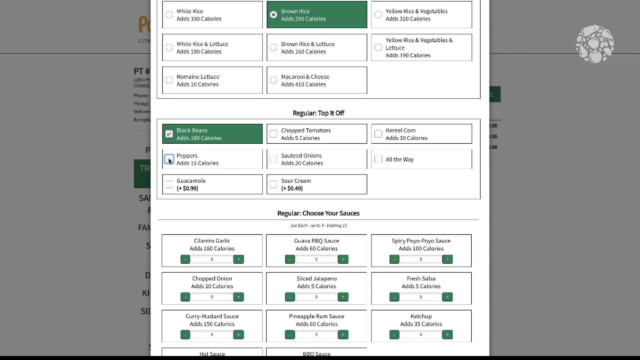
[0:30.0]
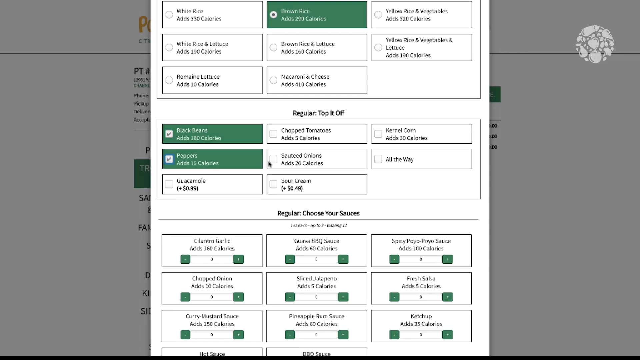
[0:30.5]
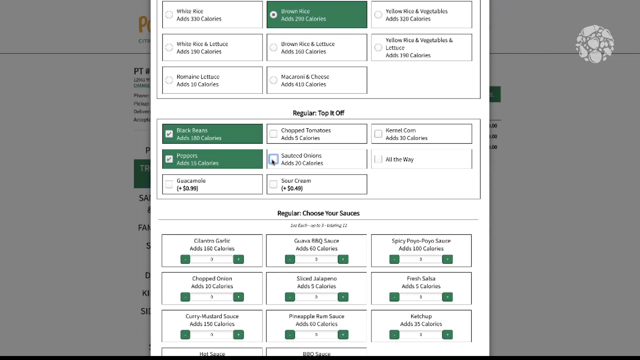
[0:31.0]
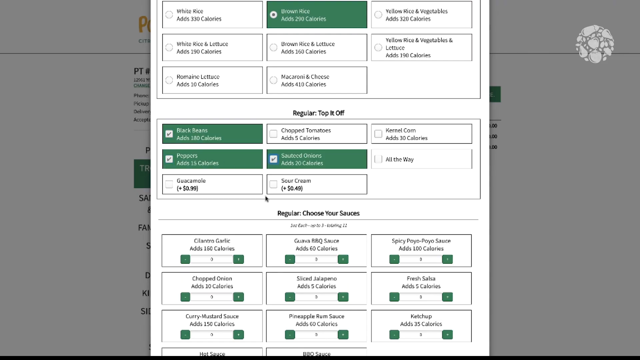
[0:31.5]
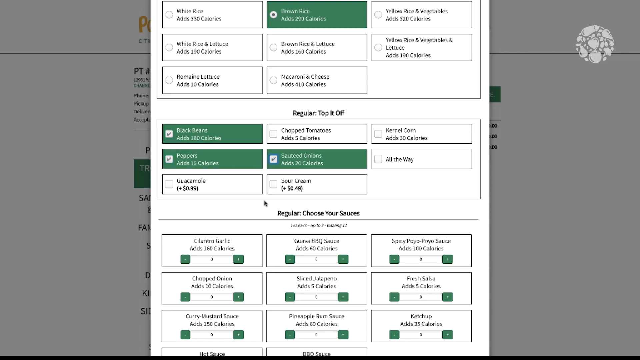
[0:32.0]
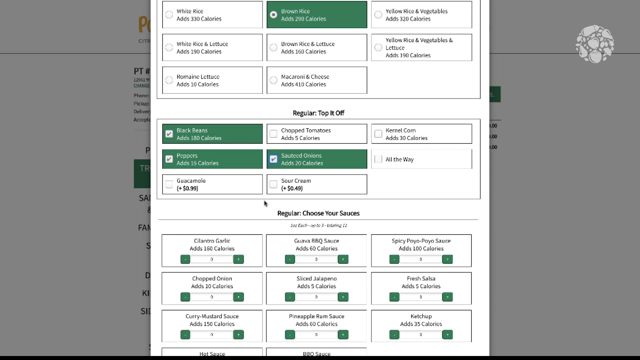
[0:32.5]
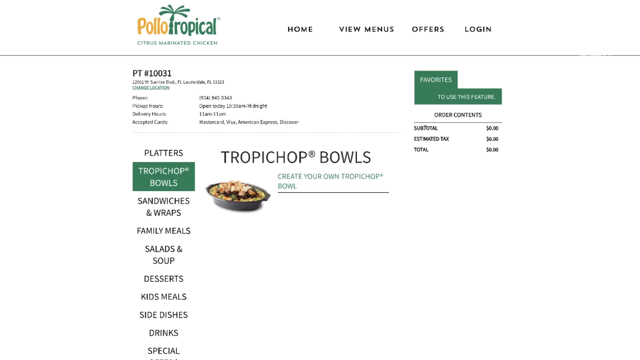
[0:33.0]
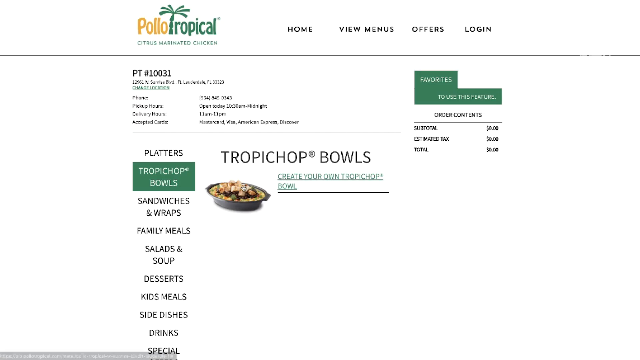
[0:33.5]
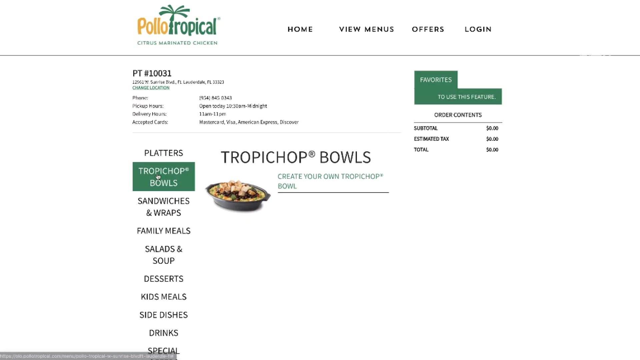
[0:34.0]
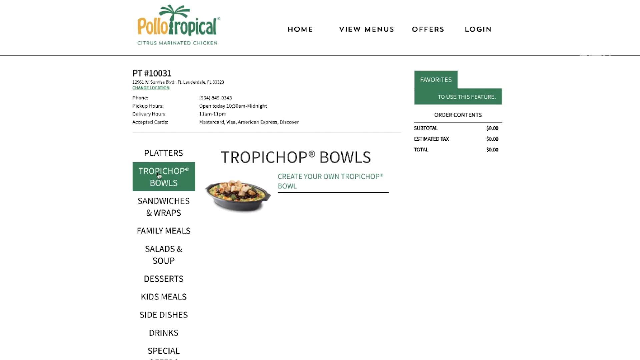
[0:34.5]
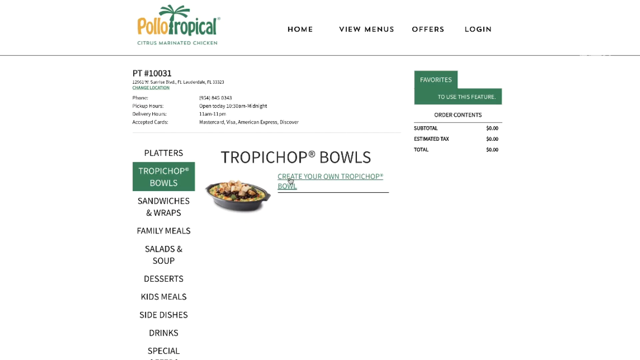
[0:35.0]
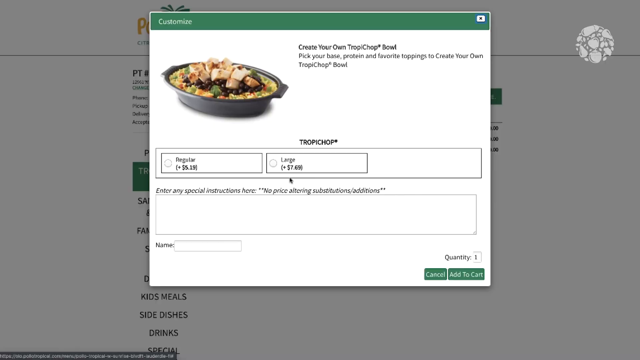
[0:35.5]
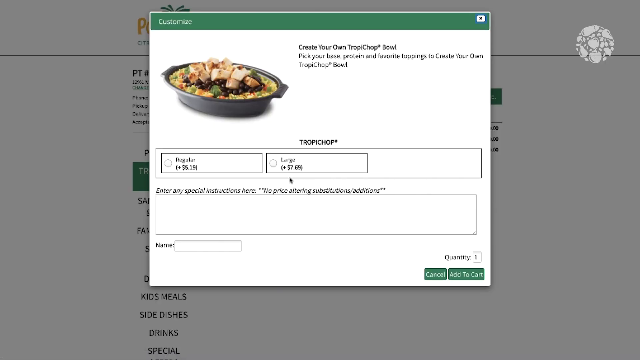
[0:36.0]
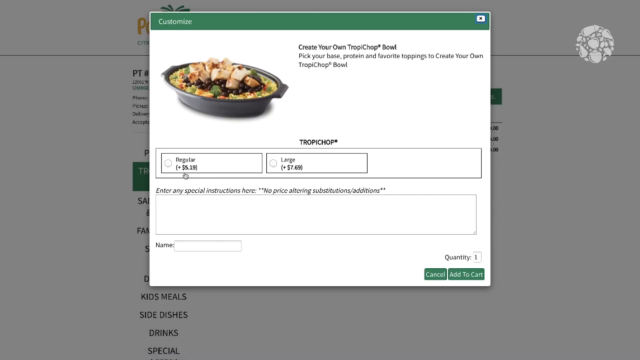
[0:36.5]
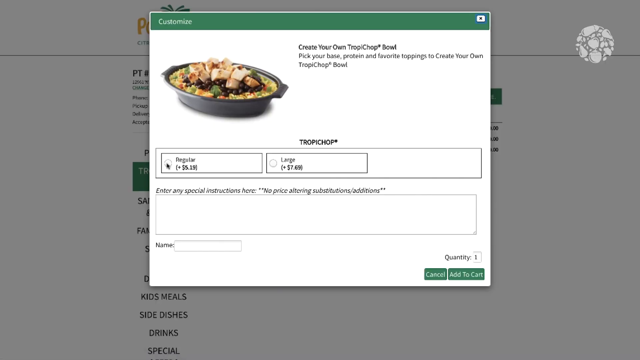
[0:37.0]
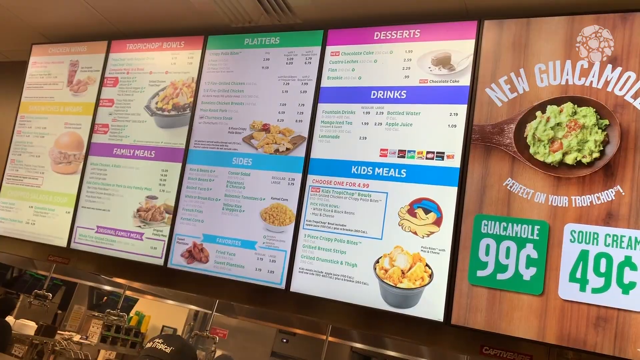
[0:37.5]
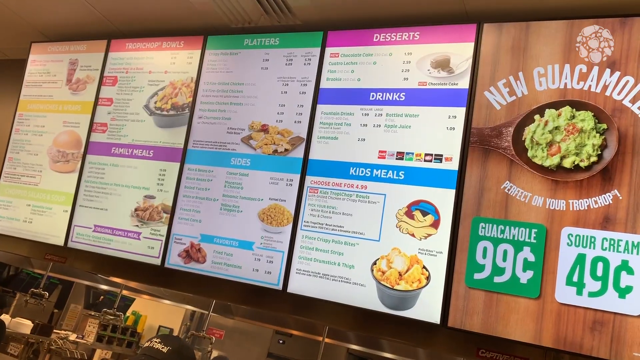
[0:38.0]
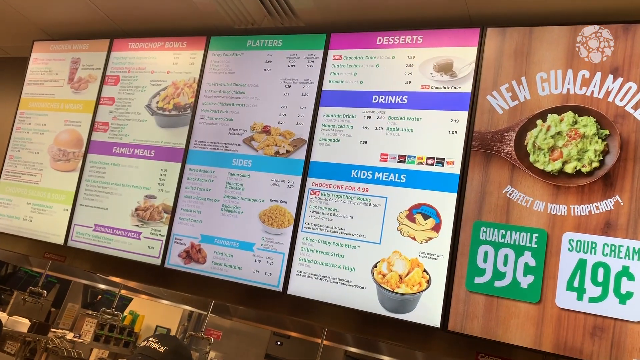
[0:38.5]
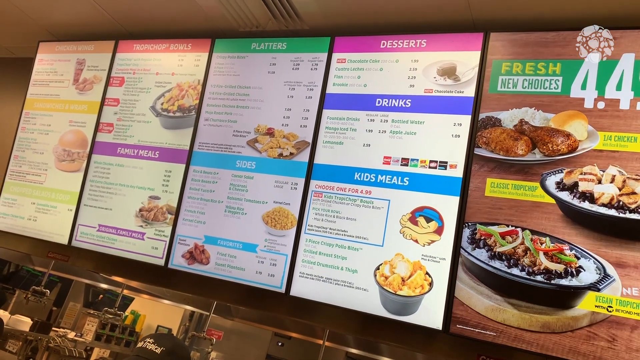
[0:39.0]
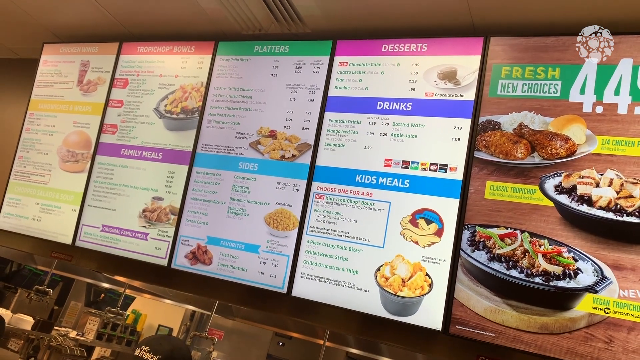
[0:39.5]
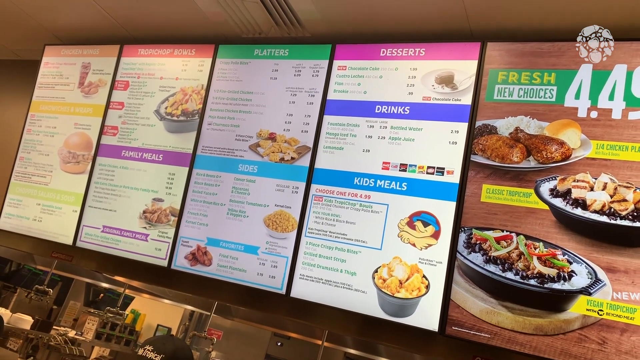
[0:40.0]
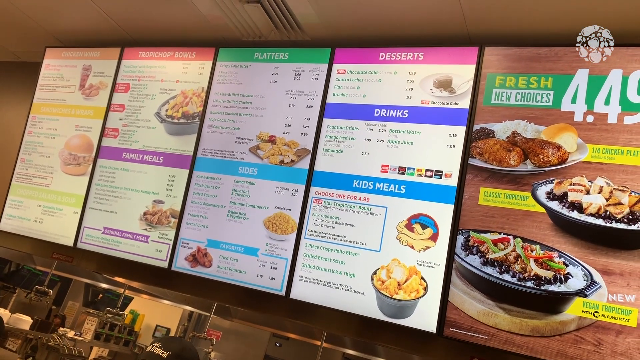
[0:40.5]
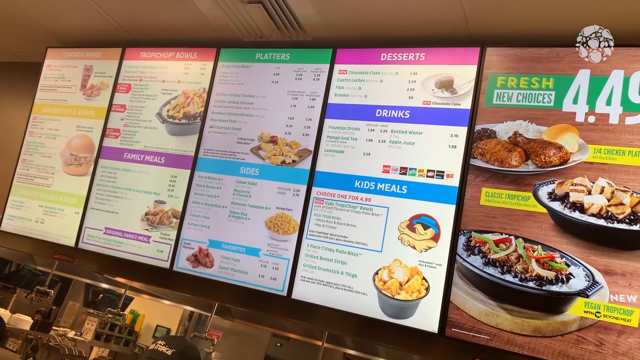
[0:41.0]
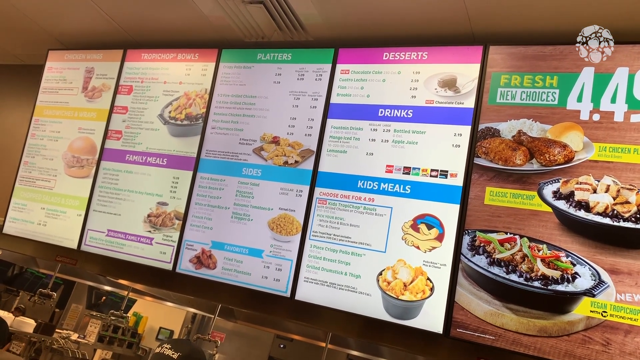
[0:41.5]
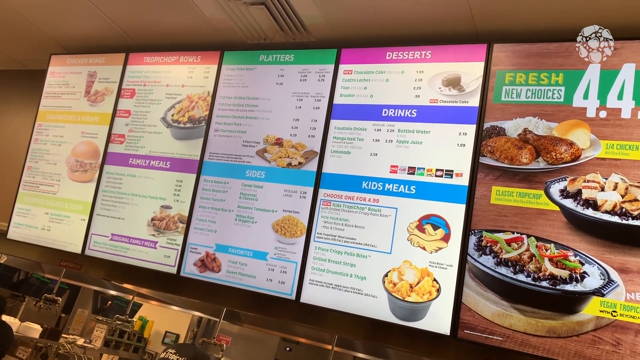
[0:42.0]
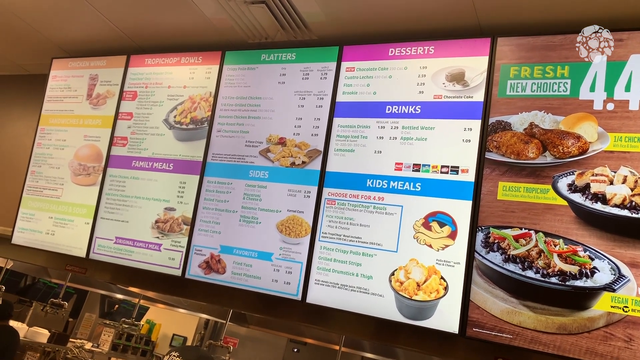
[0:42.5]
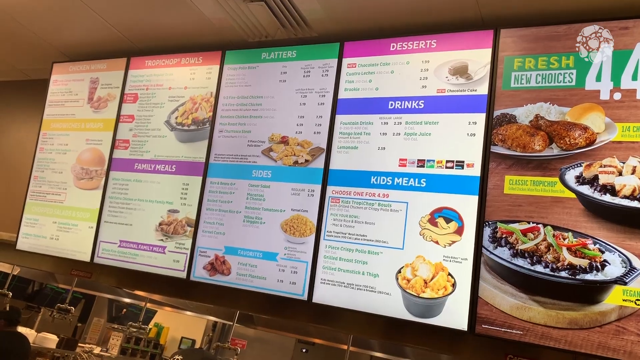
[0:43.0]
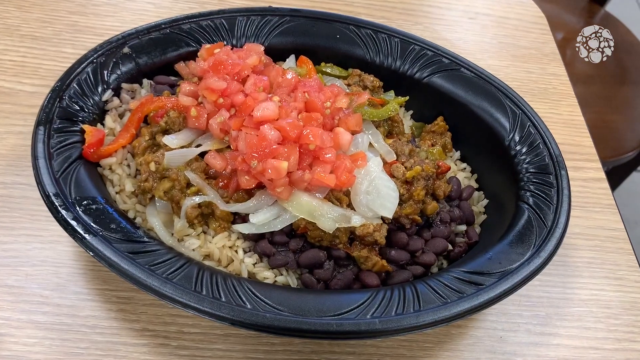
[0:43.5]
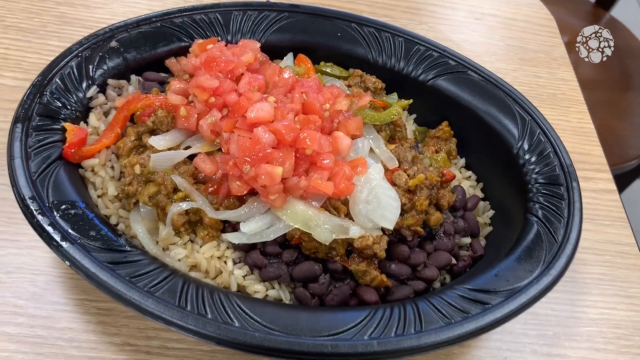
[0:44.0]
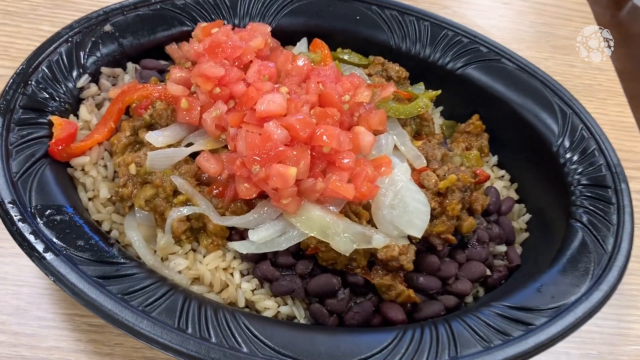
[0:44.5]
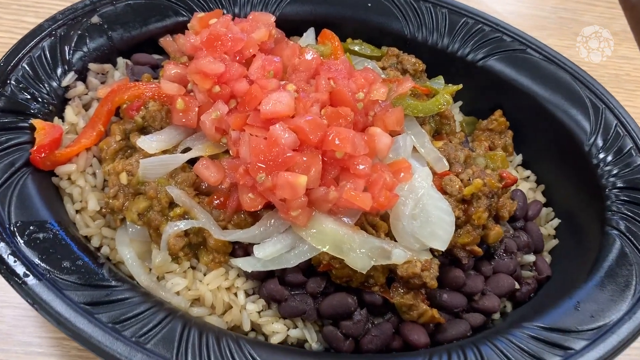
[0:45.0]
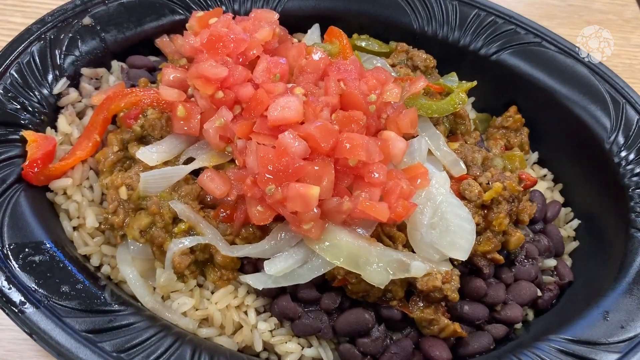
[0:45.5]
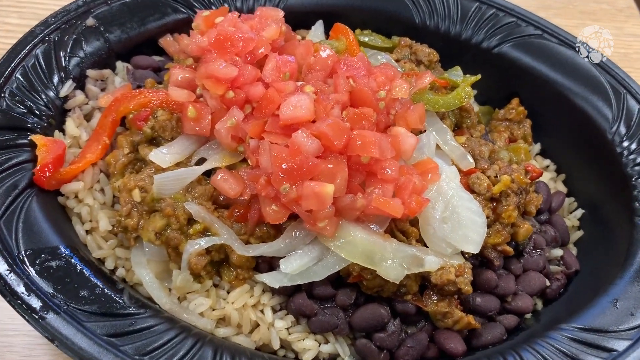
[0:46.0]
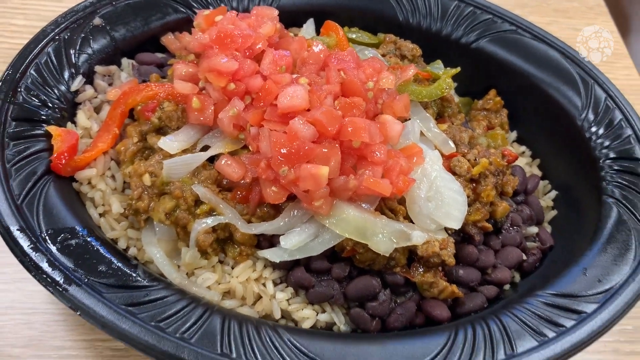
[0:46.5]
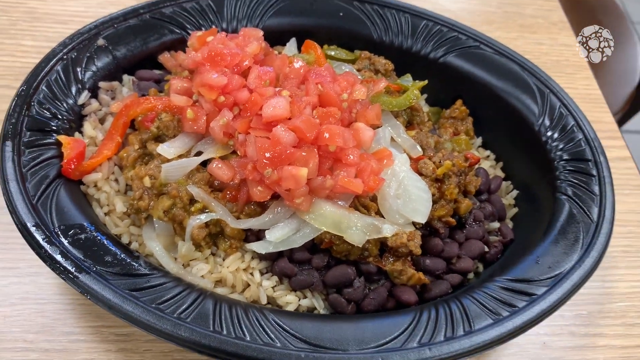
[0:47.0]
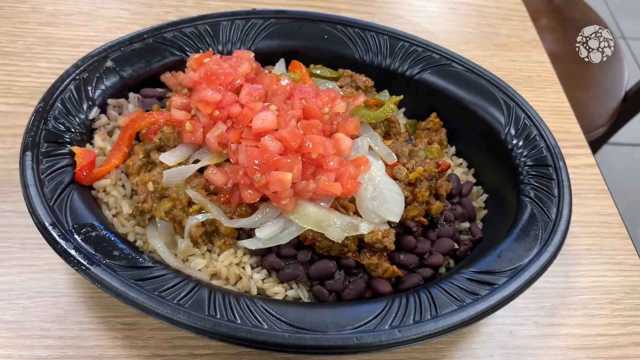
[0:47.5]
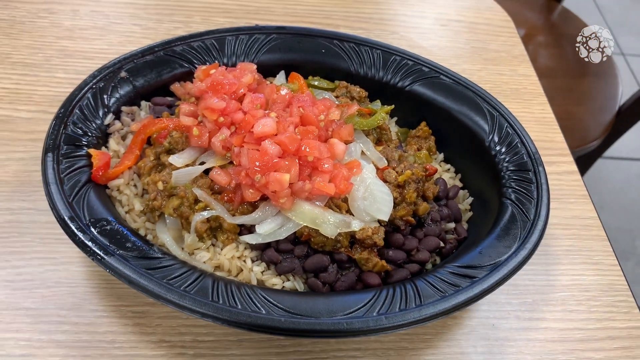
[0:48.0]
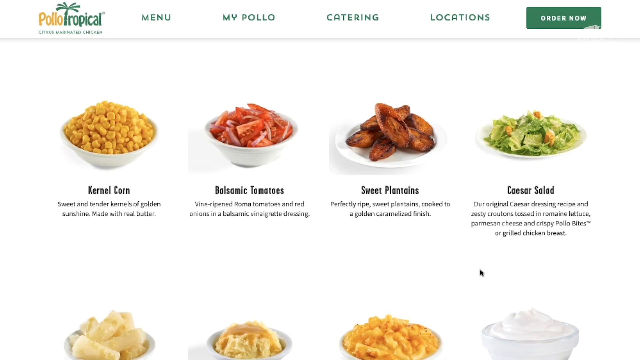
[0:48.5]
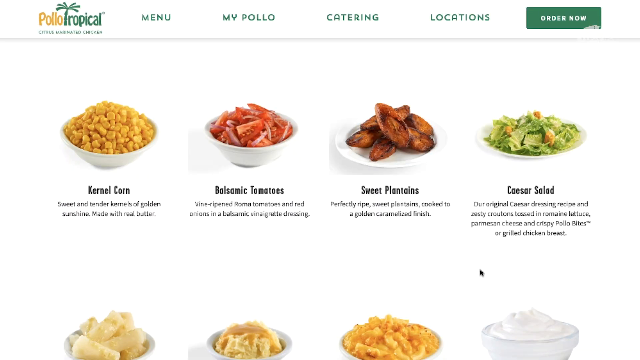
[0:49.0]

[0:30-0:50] The video maker selects items: a regular, then under "top it off" black beans, peppers and onions are selected. A Polo Tropical page appears with view menus, offers and login. Many foods are listed: platters, tropical bowls, sandwiches and wraps, family meals, salad and soup, desserts, kids meals, side dishes, drinks, and more reviews. There is a create-your-own choppy chop bowl option for customizing an order, and the user appears to be customizing this item.